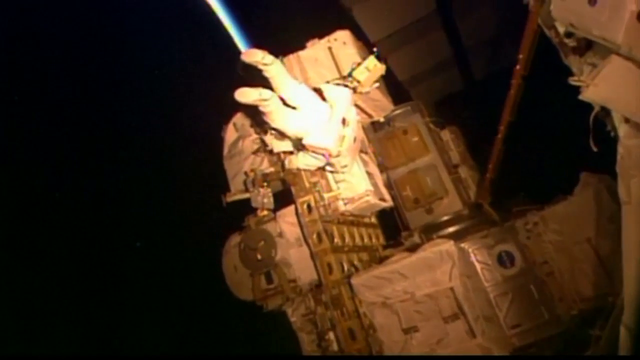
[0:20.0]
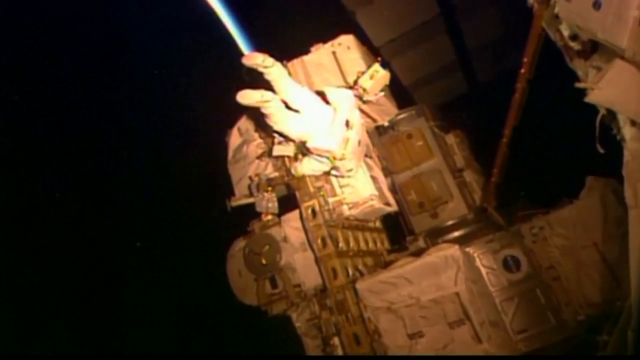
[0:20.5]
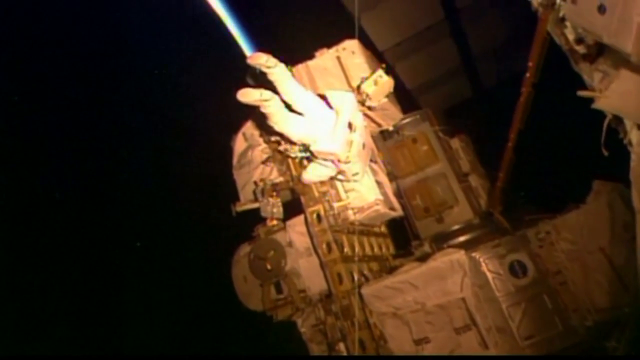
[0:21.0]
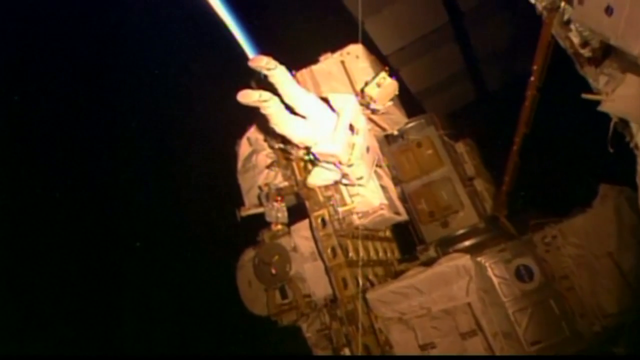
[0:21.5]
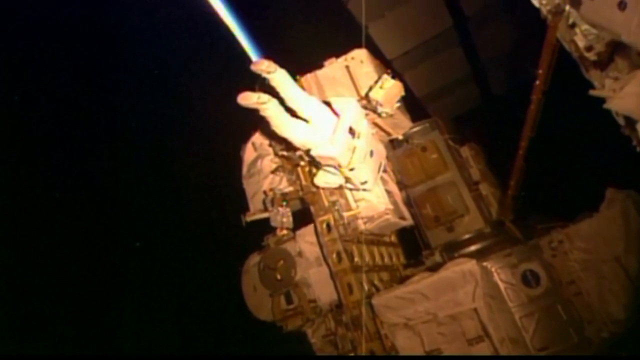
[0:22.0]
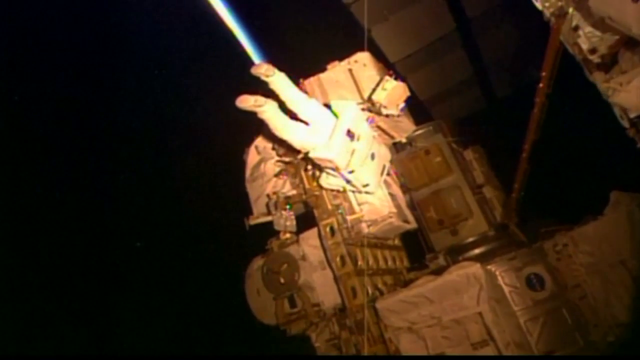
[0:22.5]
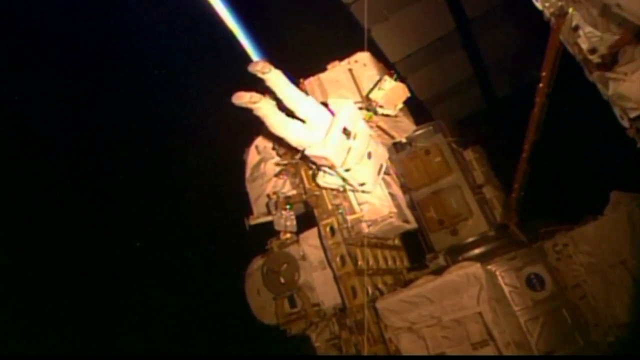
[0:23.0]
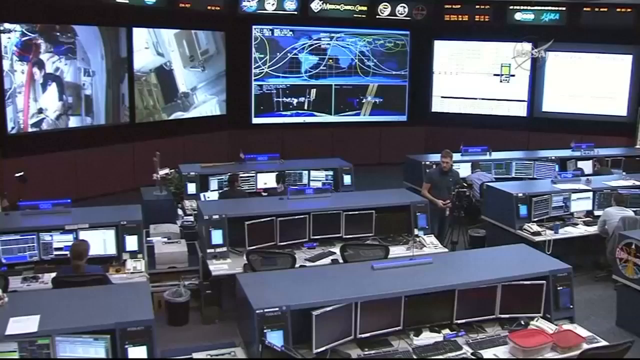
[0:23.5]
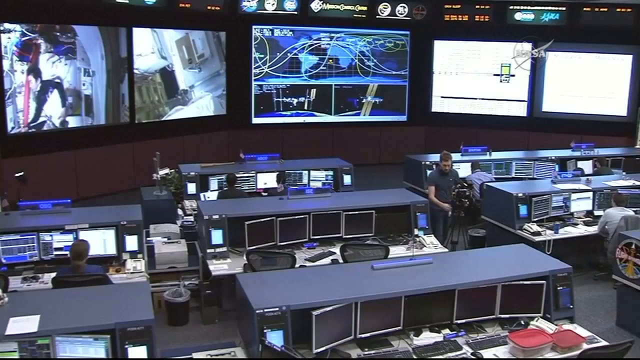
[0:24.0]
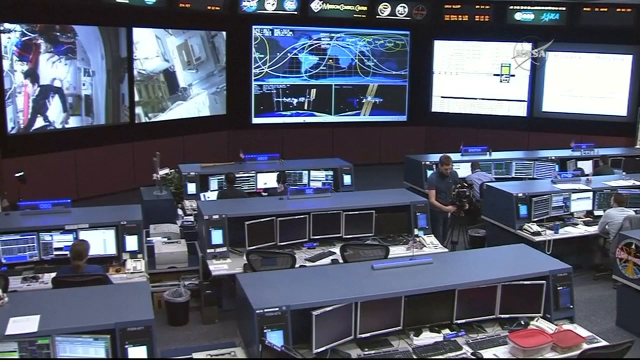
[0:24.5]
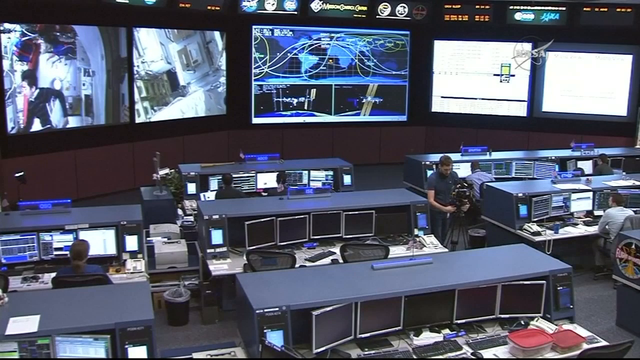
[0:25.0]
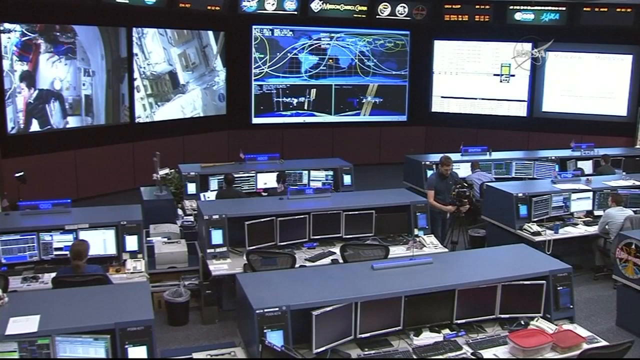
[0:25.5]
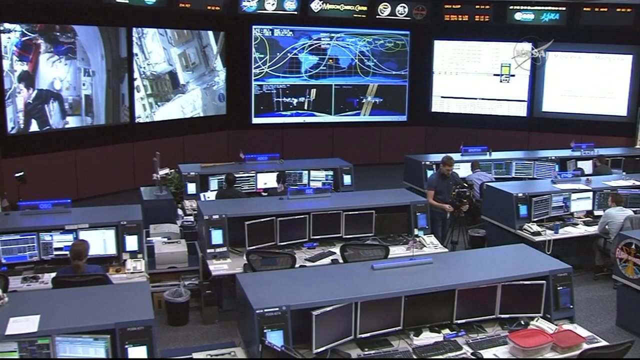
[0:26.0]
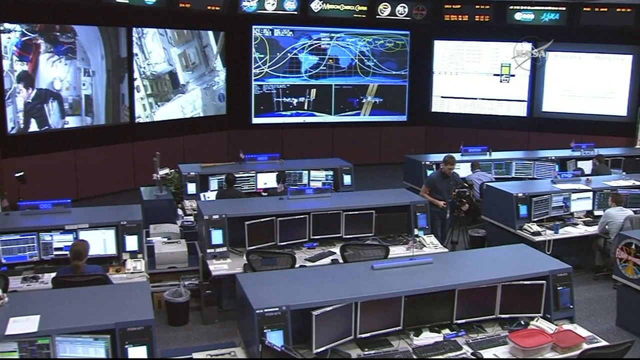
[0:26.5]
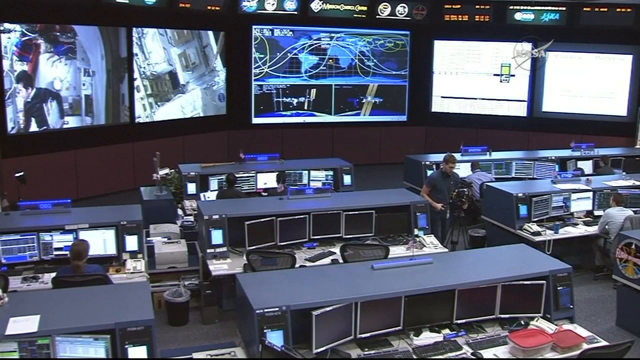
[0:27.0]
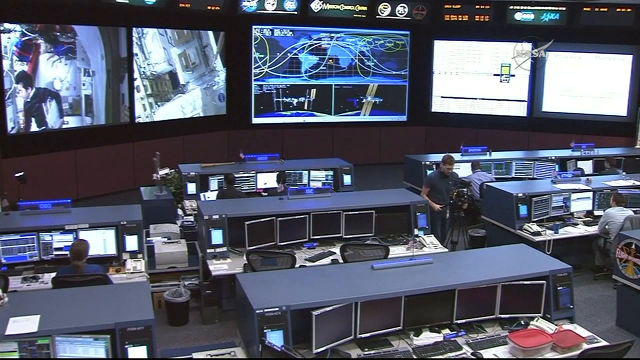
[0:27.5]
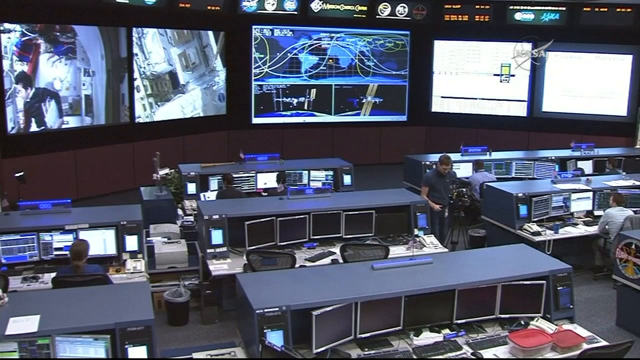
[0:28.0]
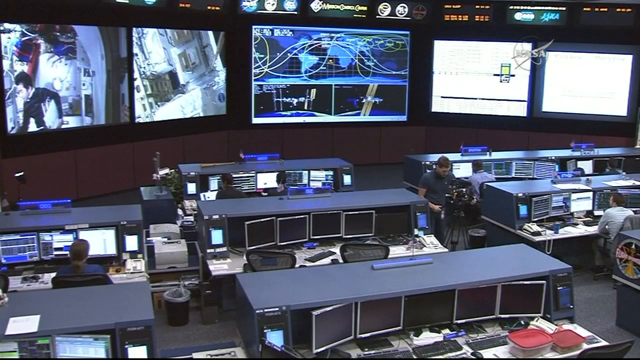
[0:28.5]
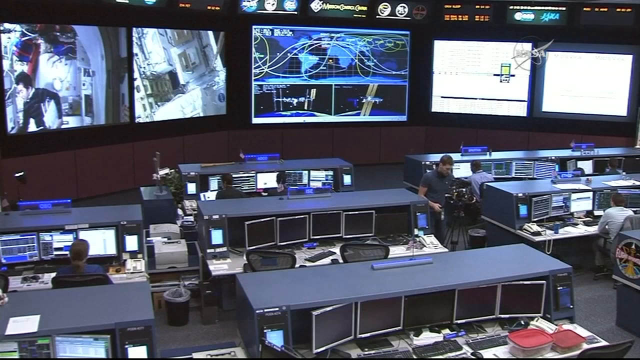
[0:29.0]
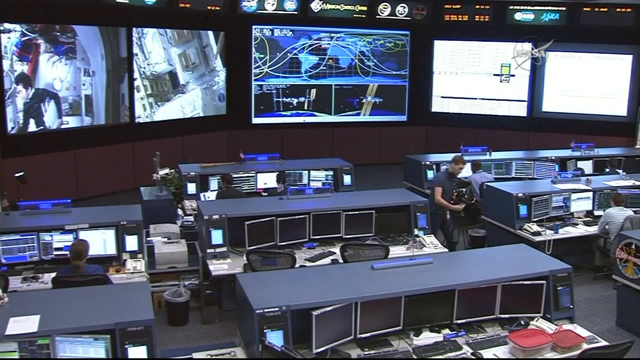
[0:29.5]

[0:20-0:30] An astronaut in a spacesuit on a spacewalk works on a large white structure. His feet face toward the camera and his head faces away, with the structure on the right-hand side of his head. He slowly turns so that his feet are closer to the structure he is walking on. The view cuts to a control room seen from overhead and toward the front. There are three columns of desks with three desks in each column. On the left, a person in a black shirt sits at one of the desks with the screen in front of him lit. Another person stands between the second and third columns of desks, facing the camera; he moves his left arm toward his body and appears to be moving a small object in the aisle.